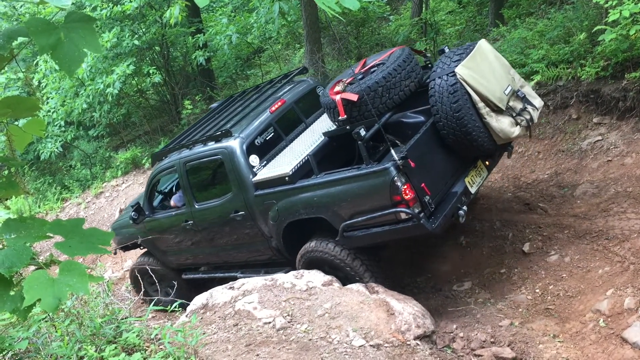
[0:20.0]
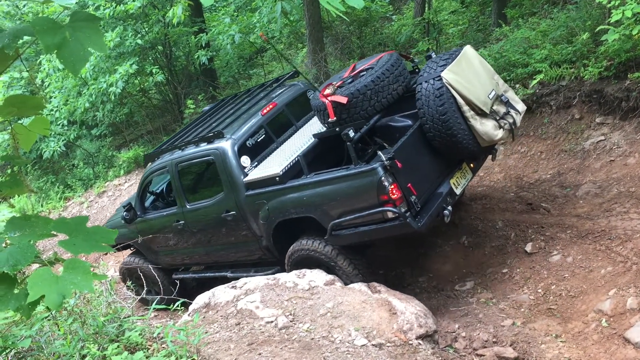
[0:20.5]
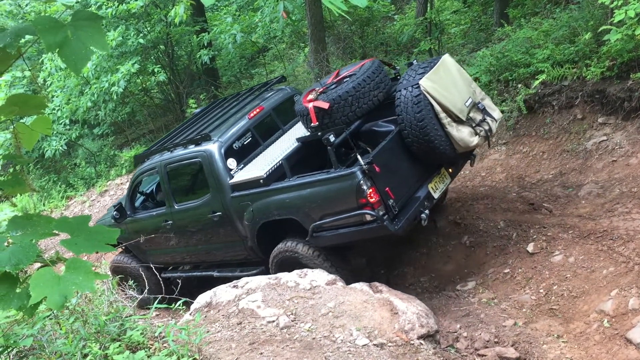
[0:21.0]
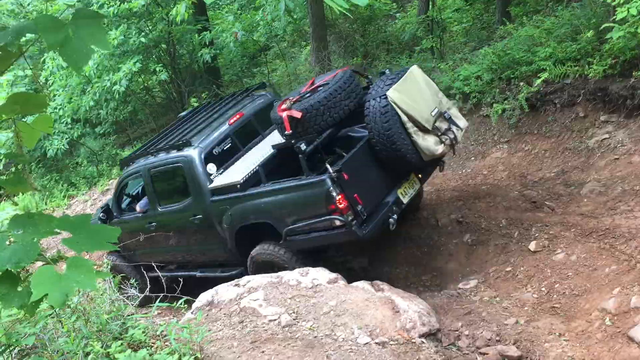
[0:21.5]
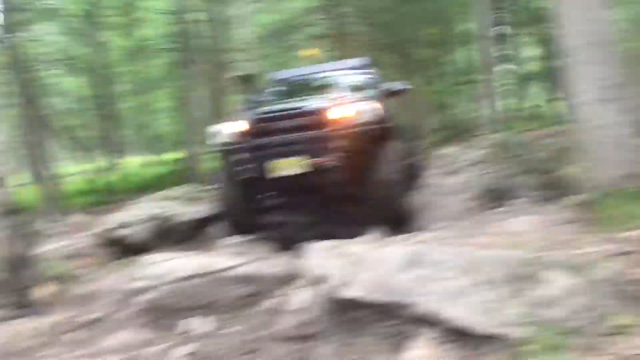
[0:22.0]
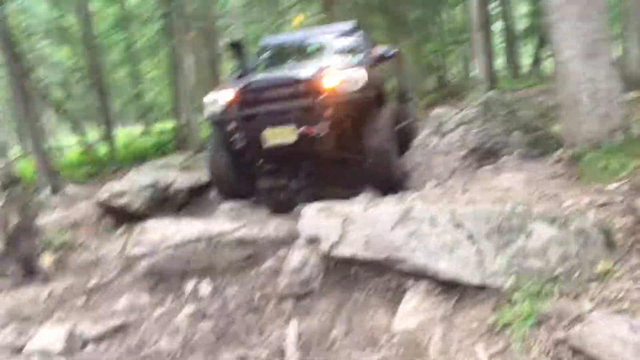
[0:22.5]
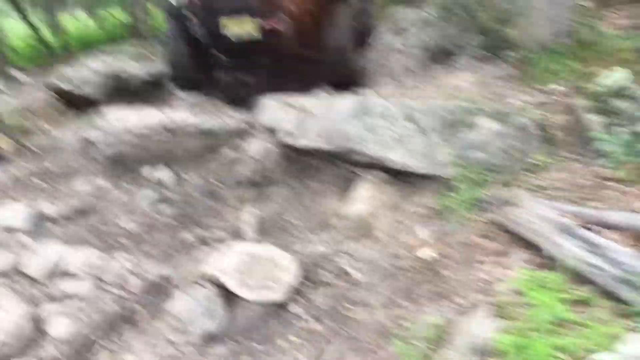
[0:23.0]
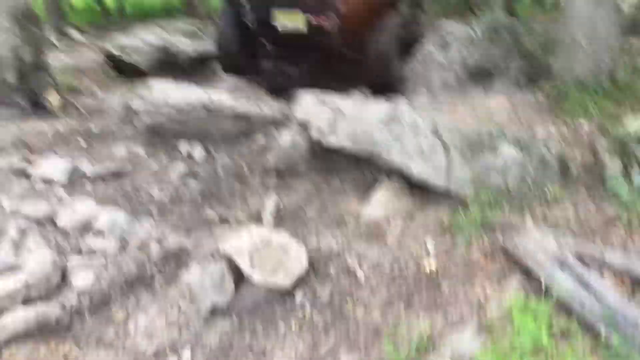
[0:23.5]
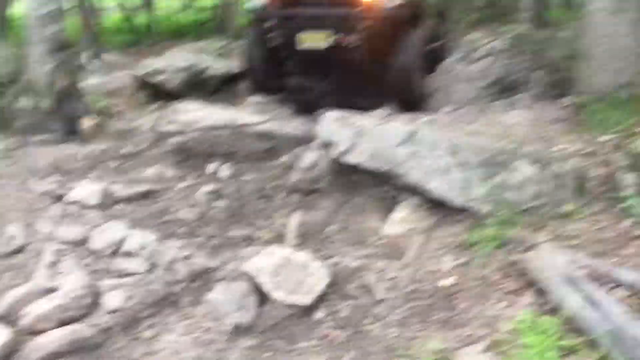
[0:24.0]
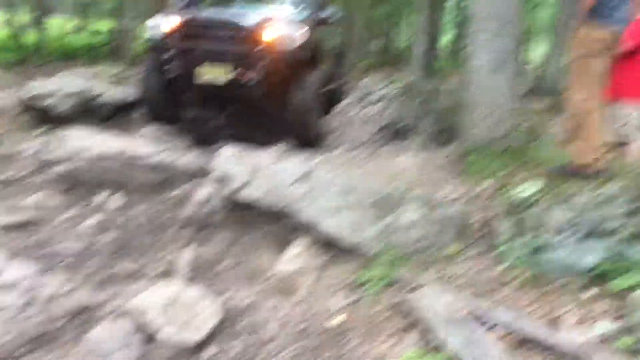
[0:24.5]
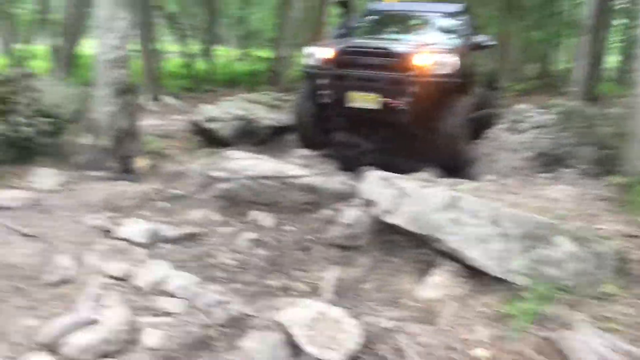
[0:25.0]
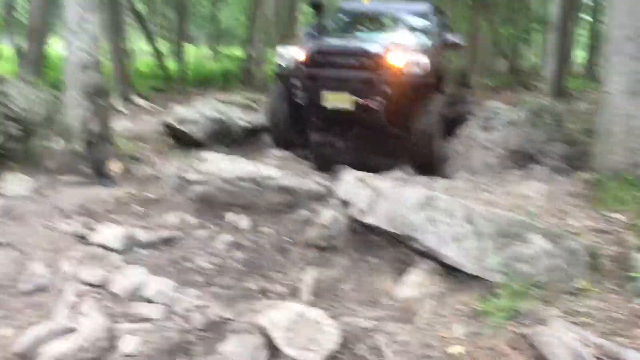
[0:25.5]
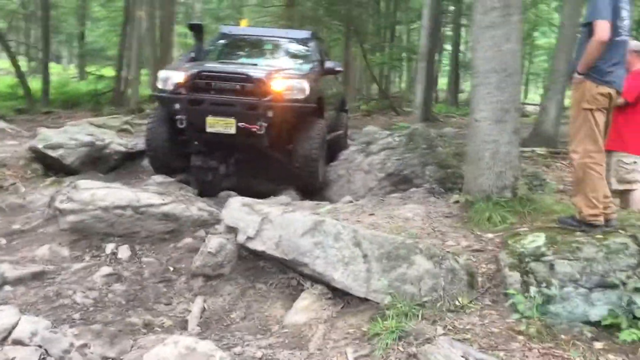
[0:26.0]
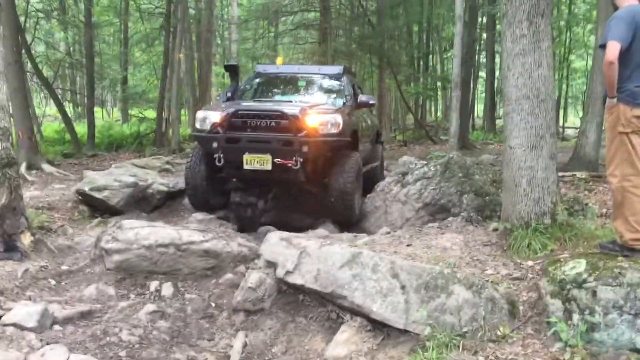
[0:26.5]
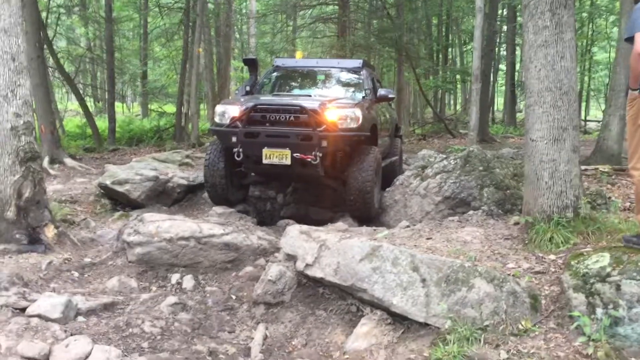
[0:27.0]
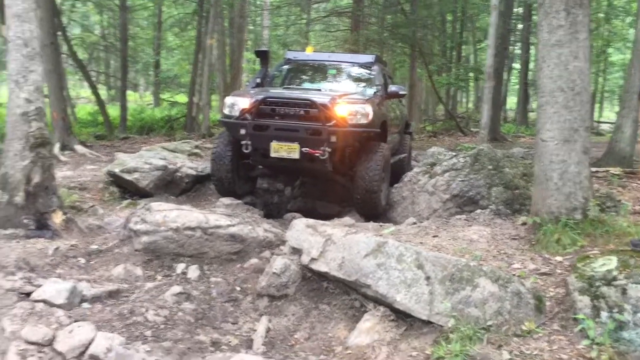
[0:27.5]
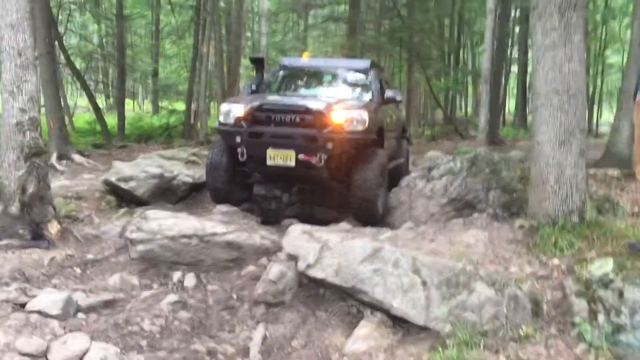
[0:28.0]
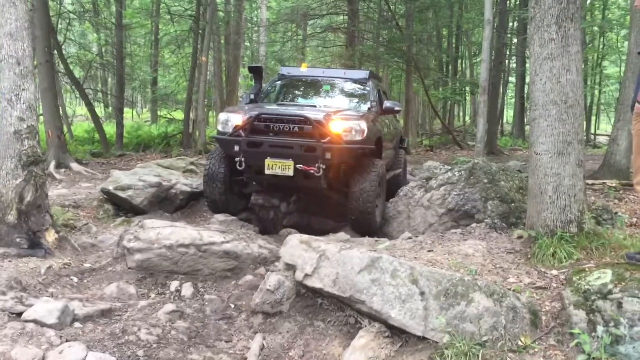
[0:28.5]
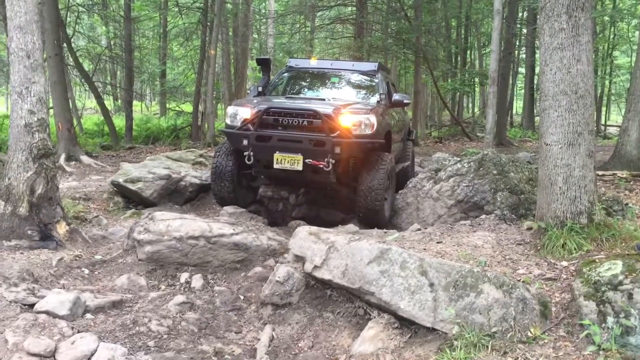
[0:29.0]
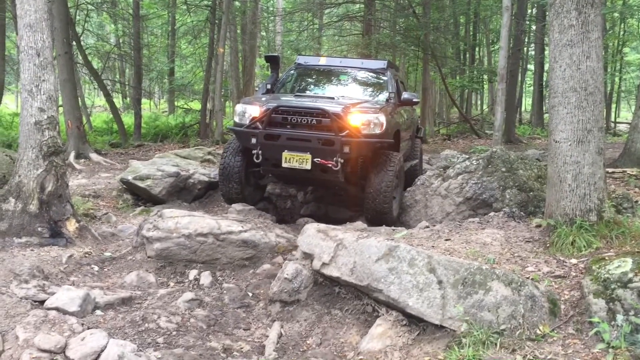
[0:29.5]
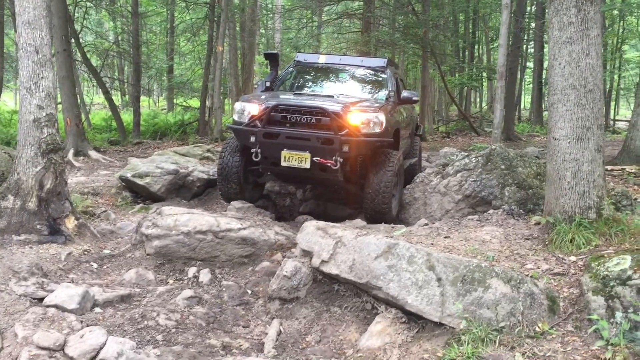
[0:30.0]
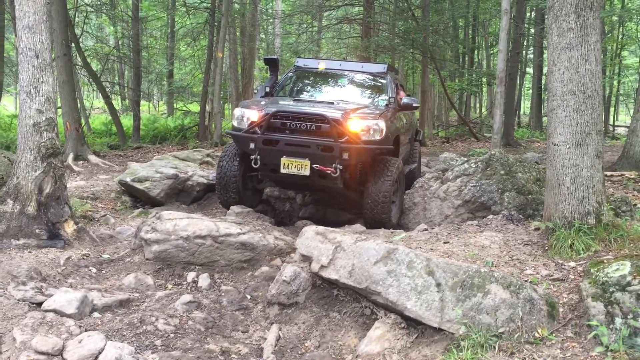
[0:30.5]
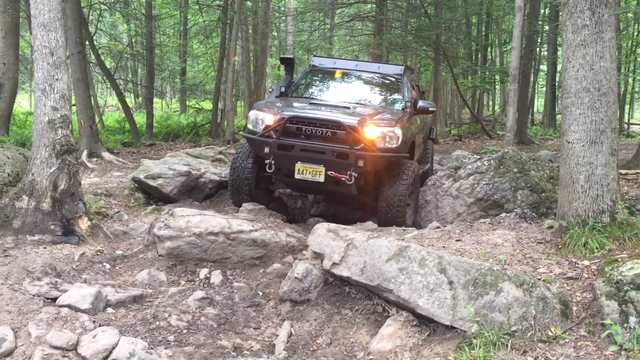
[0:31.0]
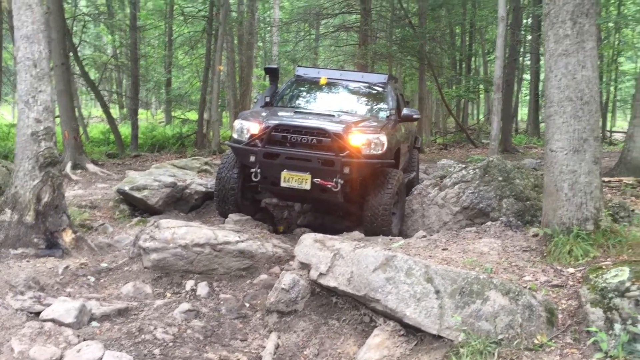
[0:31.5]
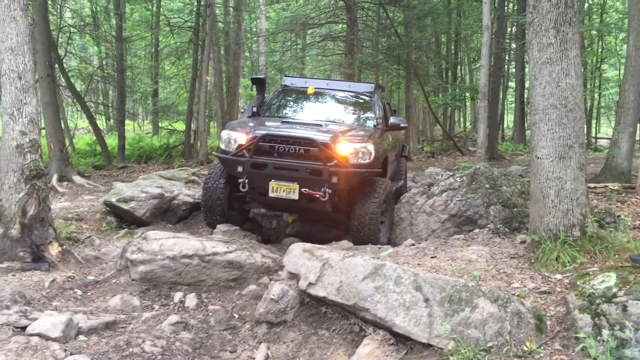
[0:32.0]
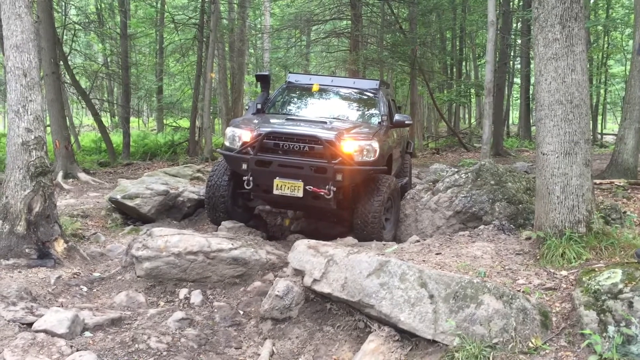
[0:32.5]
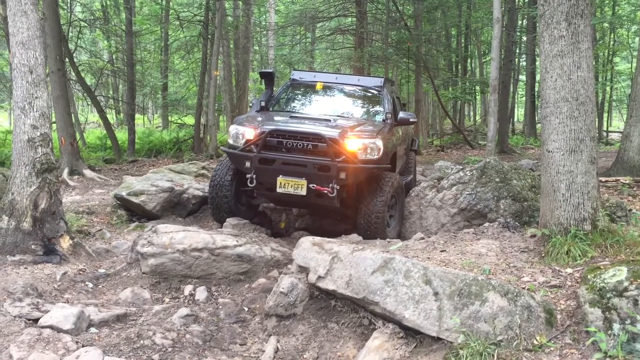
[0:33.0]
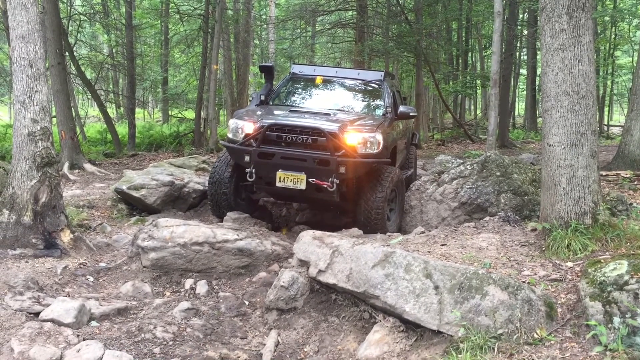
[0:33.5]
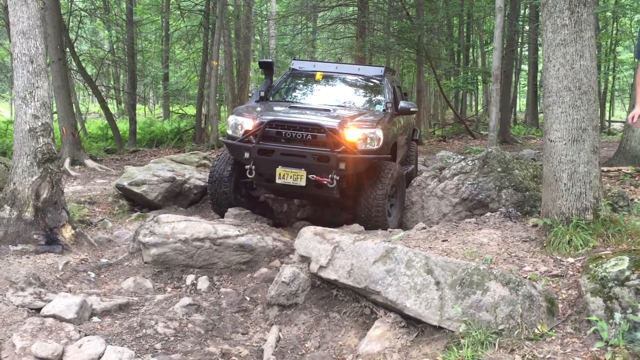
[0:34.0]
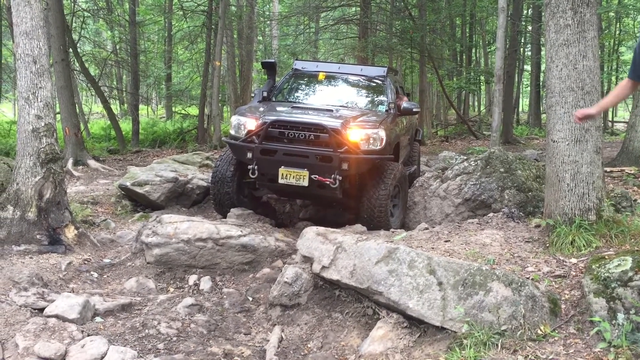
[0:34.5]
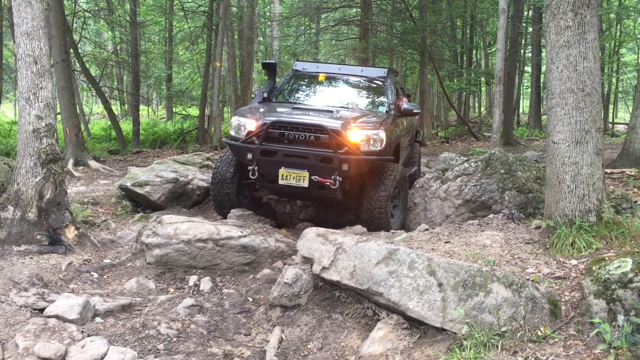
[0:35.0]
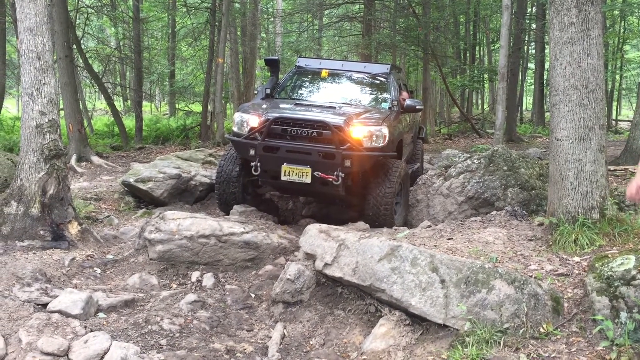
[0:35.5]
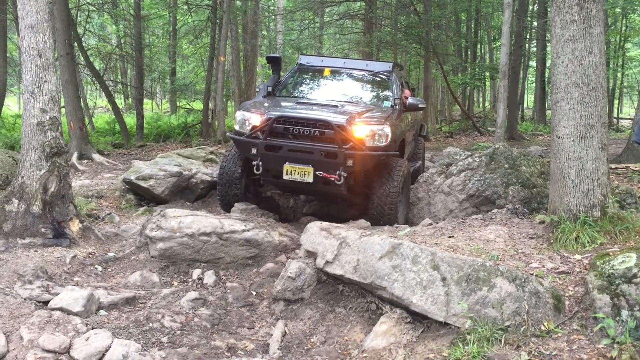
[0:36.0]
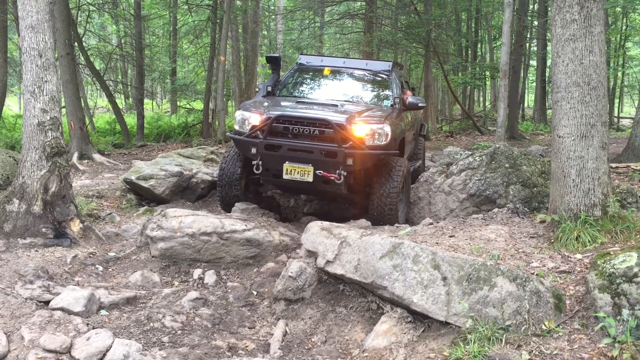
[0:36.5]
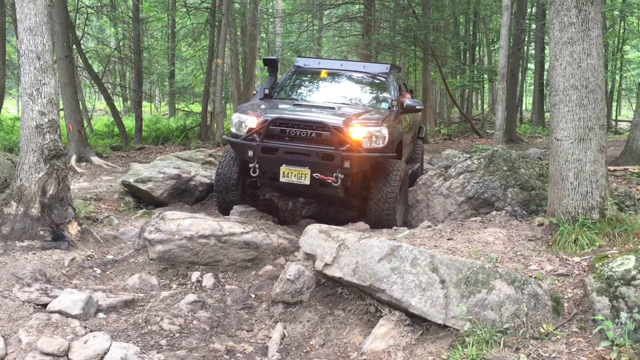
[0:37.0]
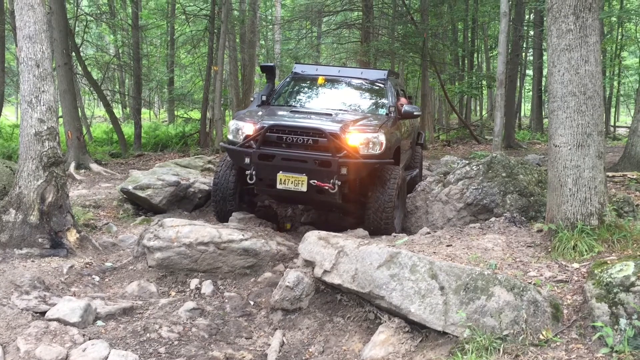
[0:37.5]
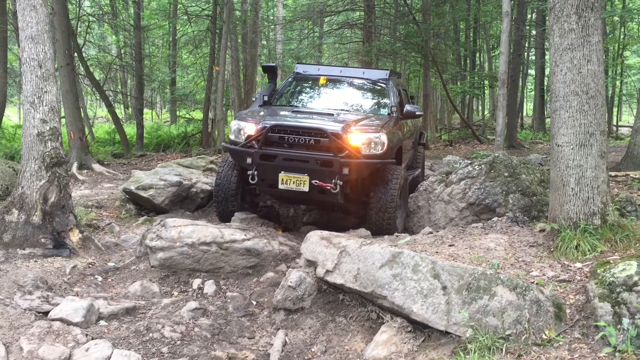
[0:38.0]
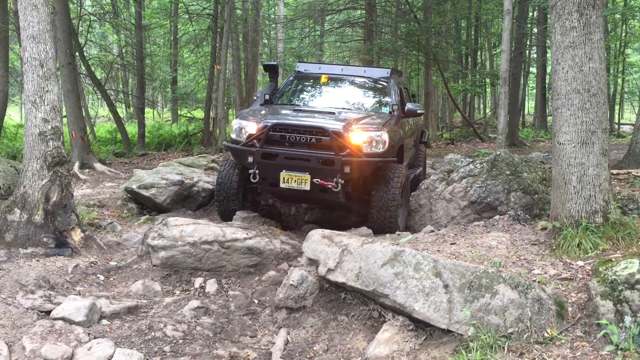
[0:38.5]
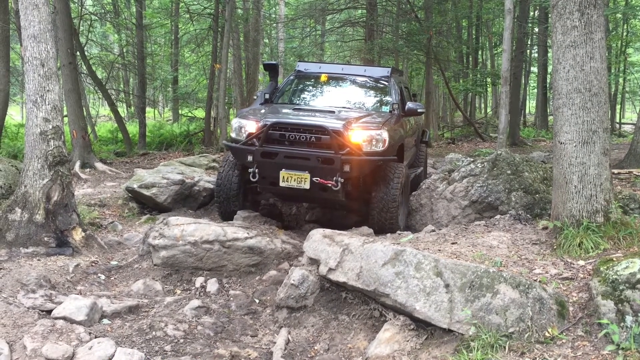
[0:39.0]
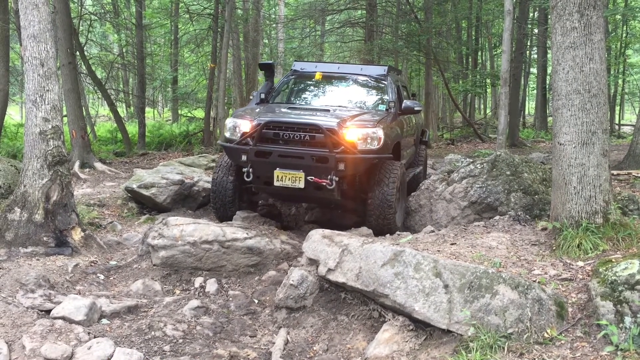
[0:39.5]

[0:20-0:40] The tire is now off the rock, and just a little of the top of the back tire is visible toward the camera. The truck is kind of tilted down to the left a little. On the tailgate there is a tire strapped to it, and a brown backpack is strapped to that tire. In the back of the truck there is a little station area where a tire is strapped down with red cables, and the toolbox is next to the tinted back window. The truck is more of a forest green color, with a black rack across the top. The truck slowly pulls down and starts going to the left, and the man's elbow comes out the window. The video cuts to a front view: heavy rocks fill the center, with trees coming up the left and right sides and across the back. The front grill and front tires of the truck are visible; it has a license plate that can't be made out, and its lights are on. As it moves forward there are big rocks and kind of a drop-off, and the camera is kind of shaking back and forth; when it shakes to the right, a man in red shorts and a blue shirt is visible for just a second. The truck goes super slowly, with the rocks almost dragging on the bottom. As it comes forward it kind of falls into a little dip, a man's arm comes in from the right side of the screen, kind of motioning, and the truck eases forward a little more.